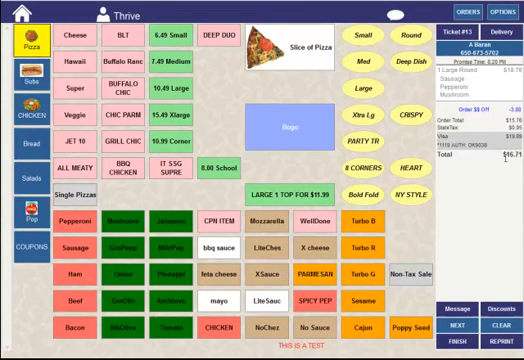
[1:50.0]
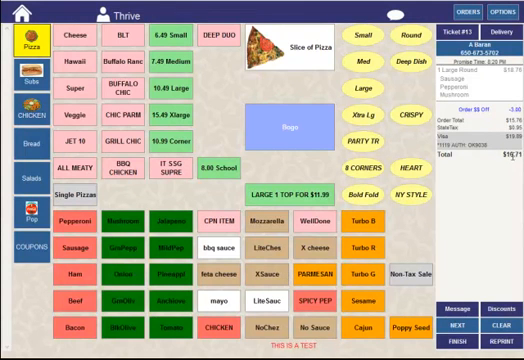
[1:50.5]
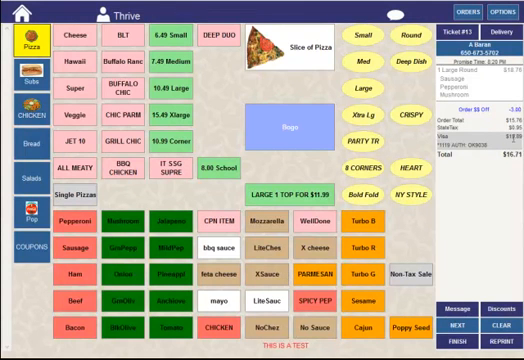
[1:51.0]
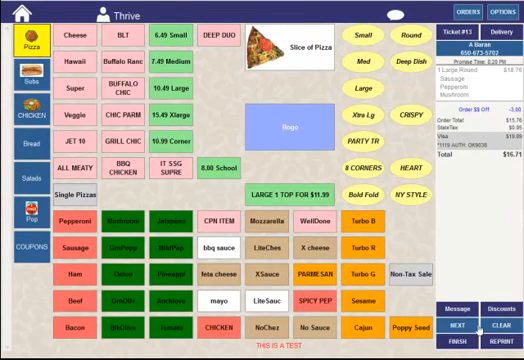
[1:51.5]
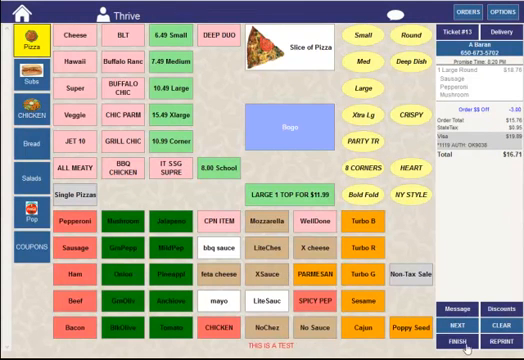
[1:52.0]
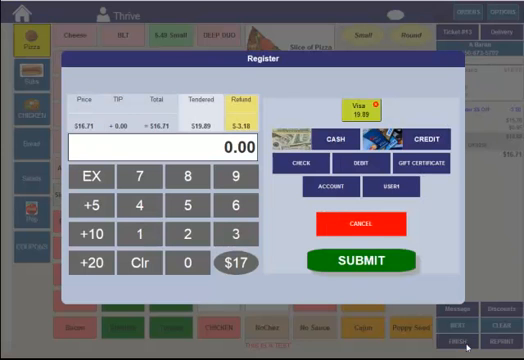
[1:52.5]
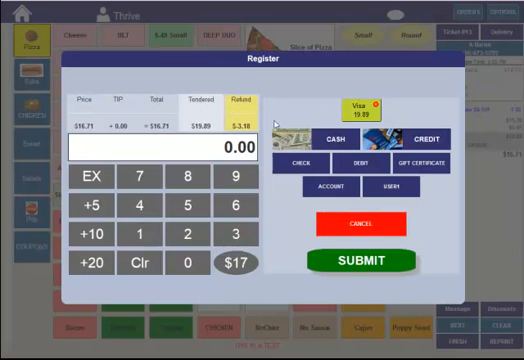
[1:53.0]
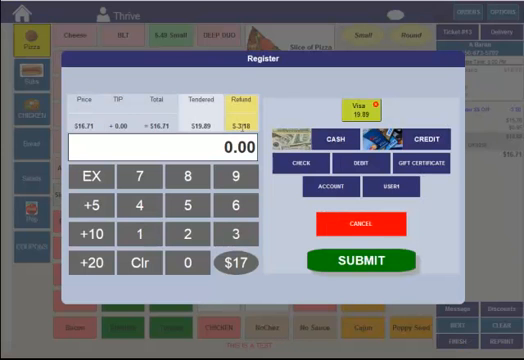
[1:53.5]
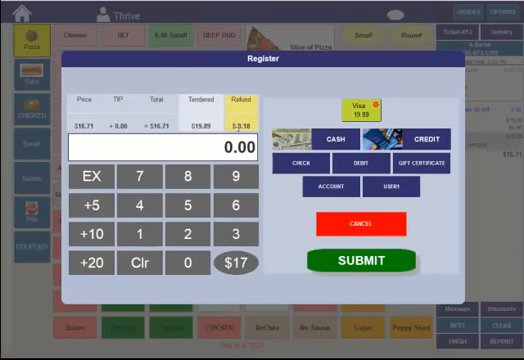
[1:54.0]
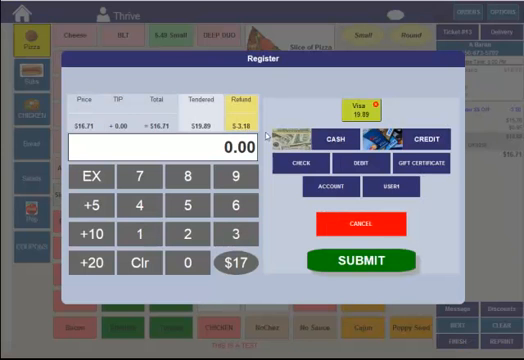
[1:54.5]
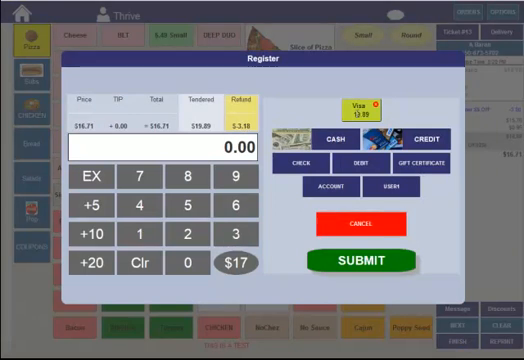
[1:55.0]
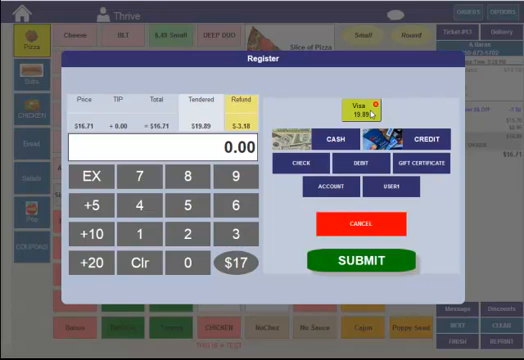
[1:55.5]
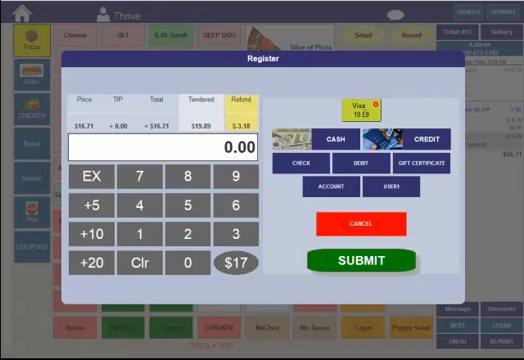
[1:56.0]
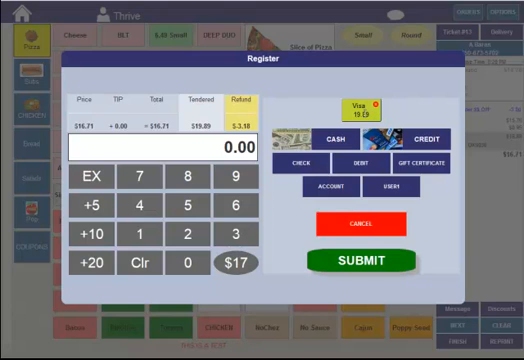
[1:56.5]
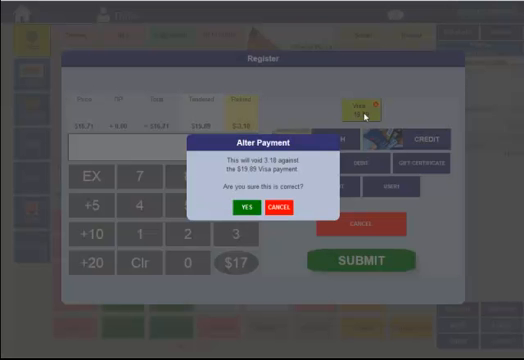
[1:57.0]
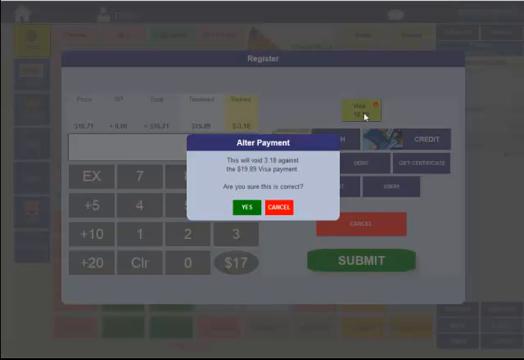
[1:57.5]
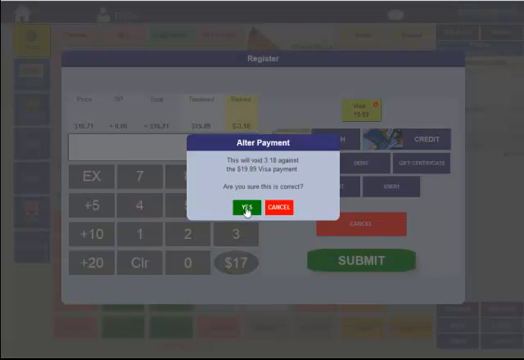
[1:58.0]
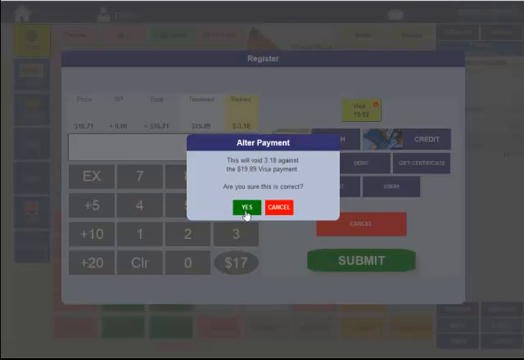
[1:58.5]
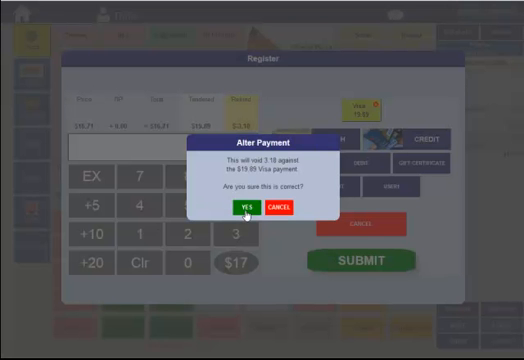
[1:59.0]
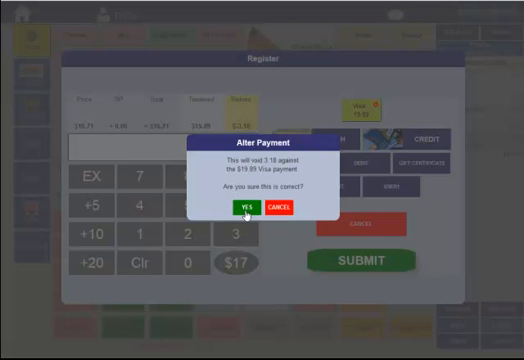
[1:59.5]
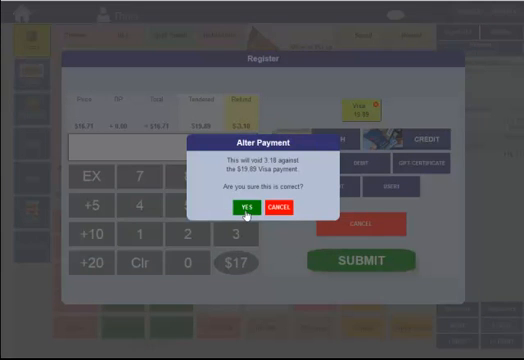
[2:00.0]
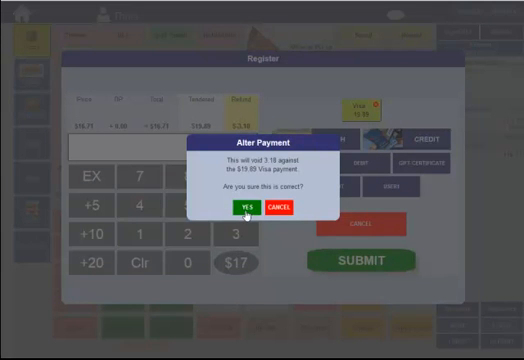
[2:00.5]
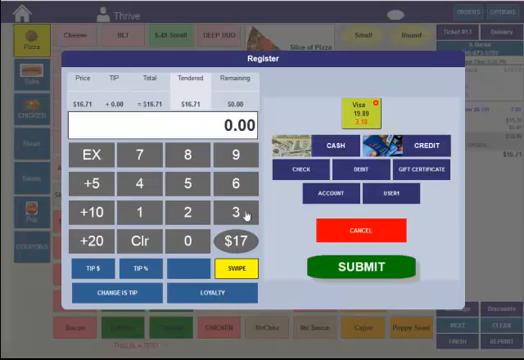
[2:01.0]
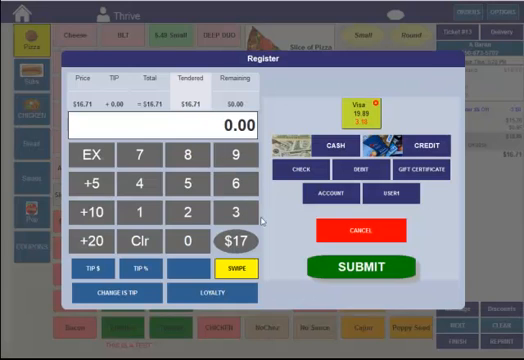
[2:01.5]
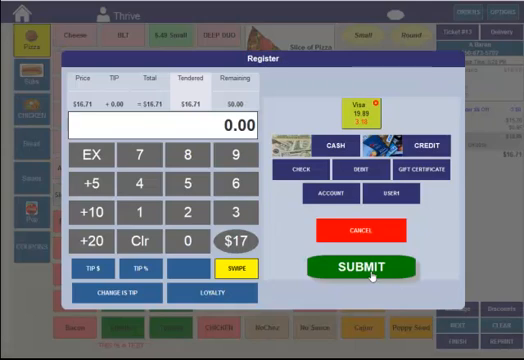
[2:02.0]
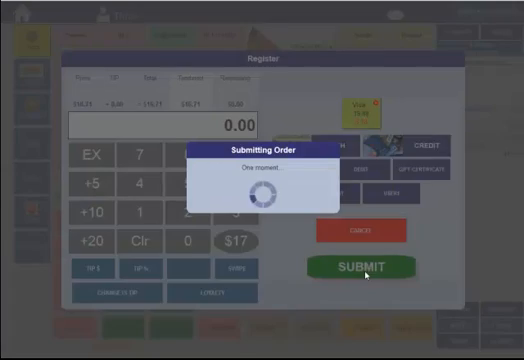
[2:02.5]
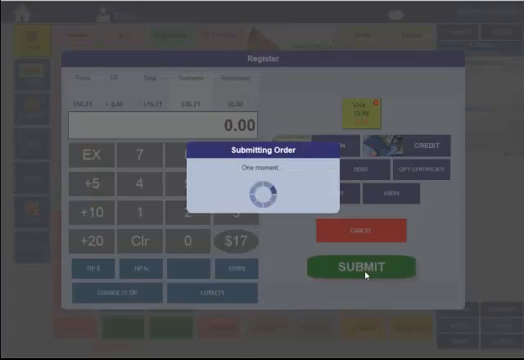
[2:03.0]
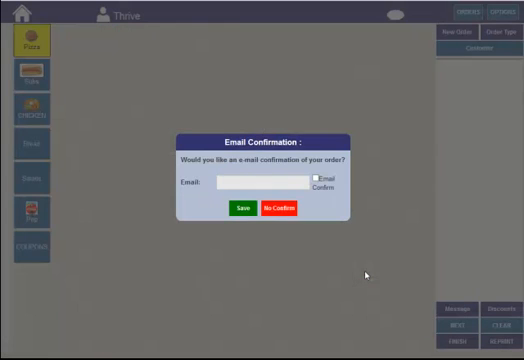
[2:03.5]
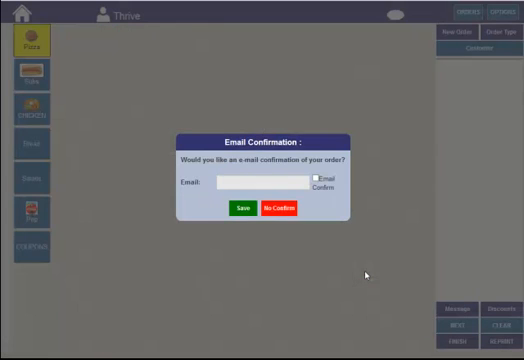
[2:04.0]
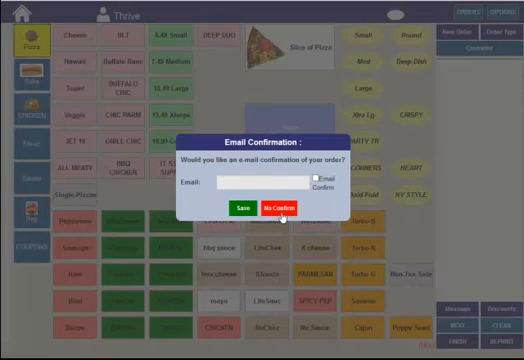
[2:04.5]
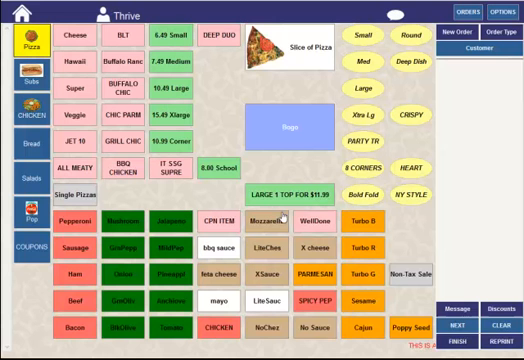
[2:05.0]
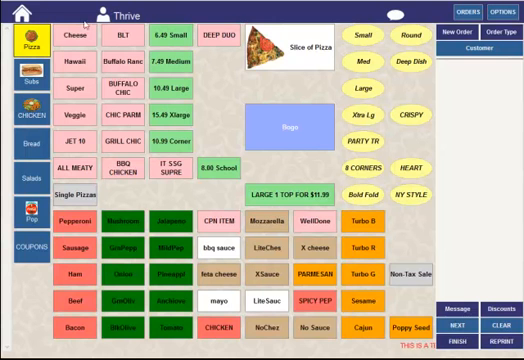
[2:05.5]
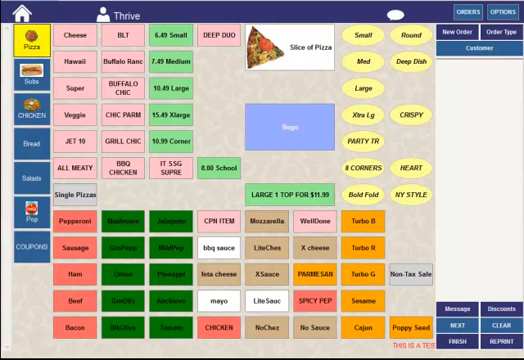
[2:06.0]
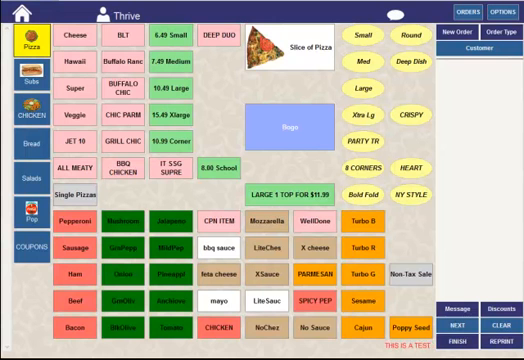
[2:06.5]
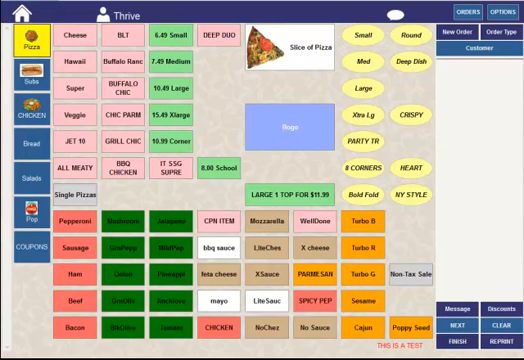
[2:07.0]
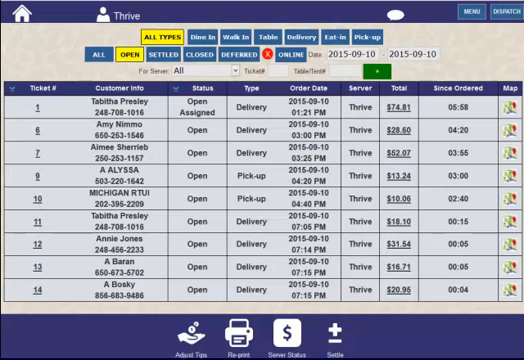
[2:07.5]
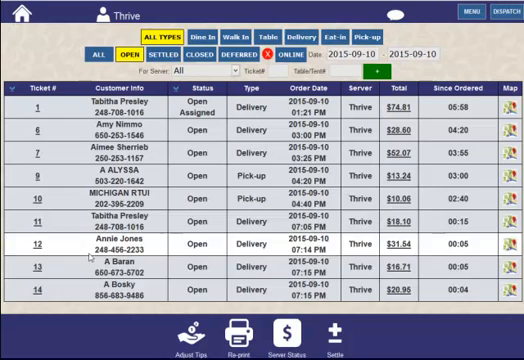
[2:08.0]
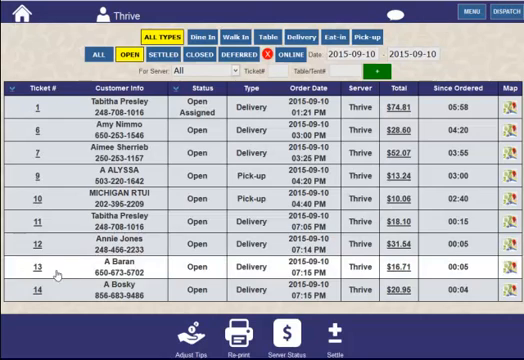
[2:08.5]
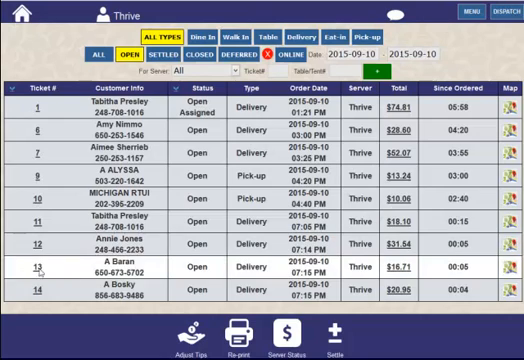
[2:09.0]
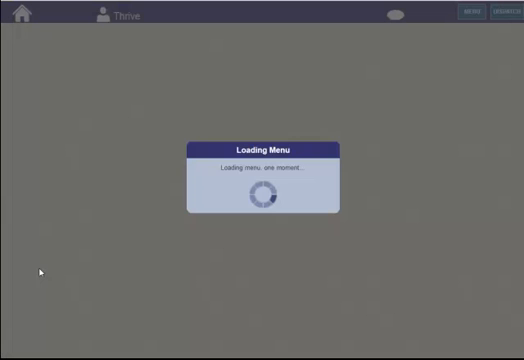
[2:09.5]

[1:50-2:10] The person heads to the cash register option, where the discount has been added. This customer also pays via Visa: the Visa payment option is clicked, then a green icon reading "yes", and the order is submitted. An icon pops up reading "submitting order" and asking to wait one moment. The email confirmation prompt appears, asking "would you like an email notification to confirm your order", and that option is not chosen, completing A. Baran's order.